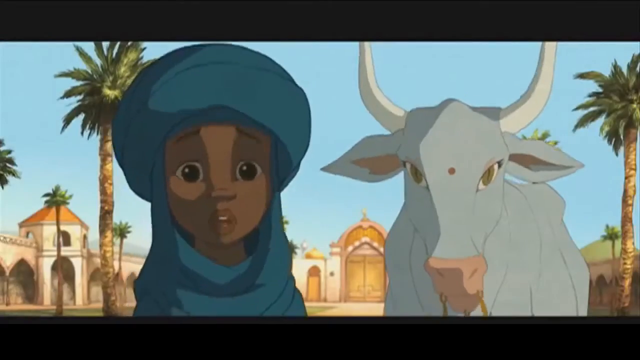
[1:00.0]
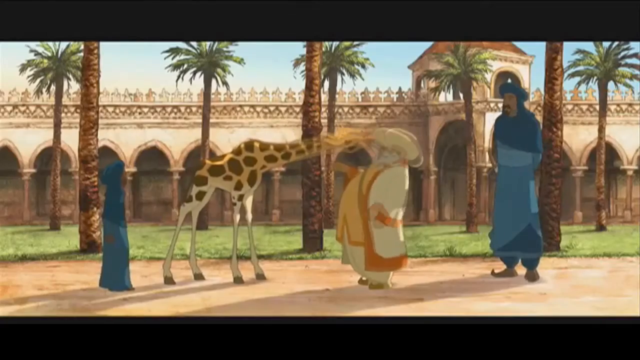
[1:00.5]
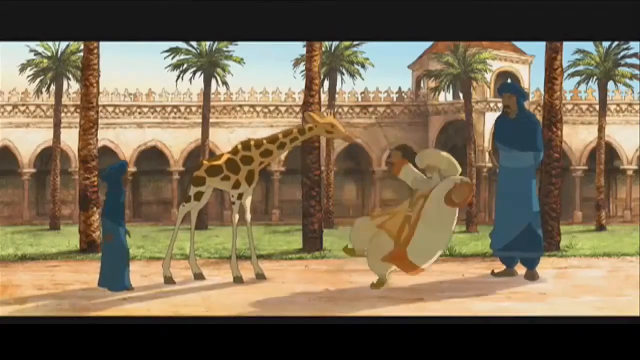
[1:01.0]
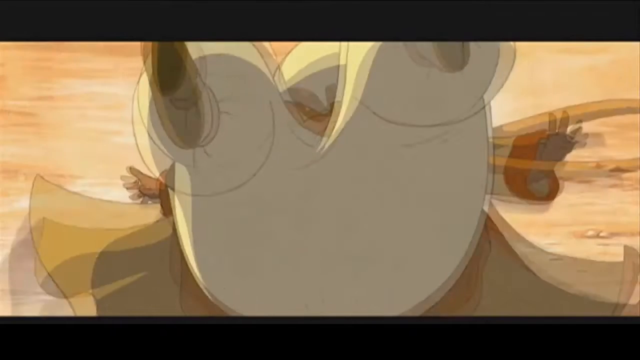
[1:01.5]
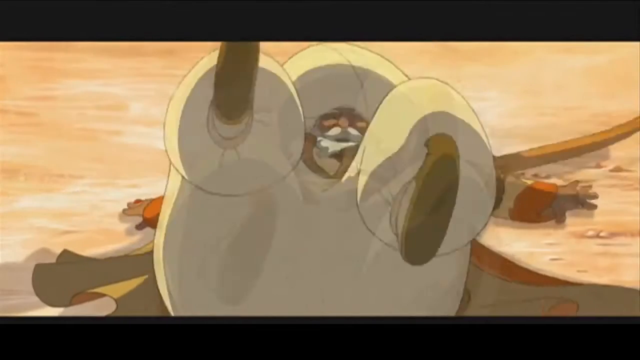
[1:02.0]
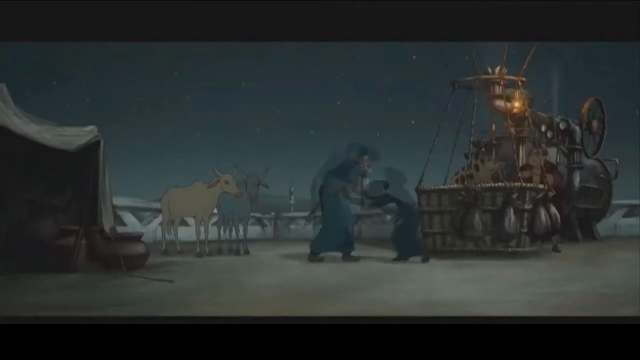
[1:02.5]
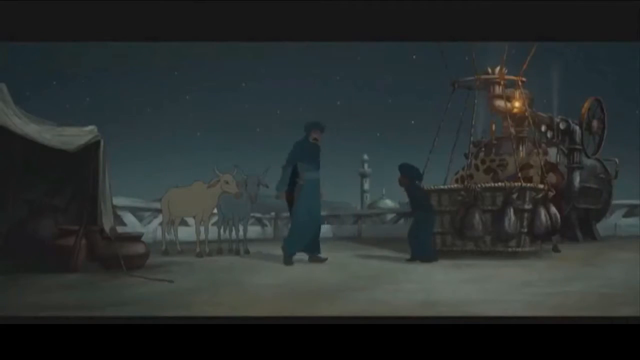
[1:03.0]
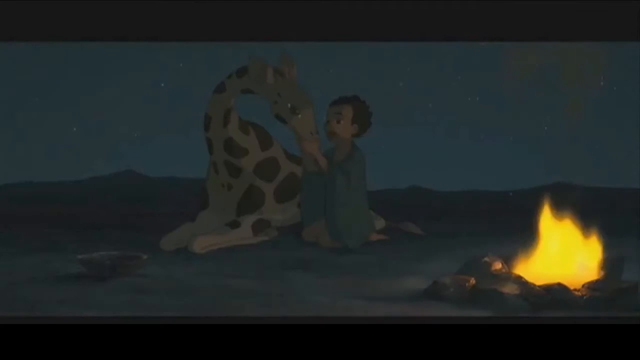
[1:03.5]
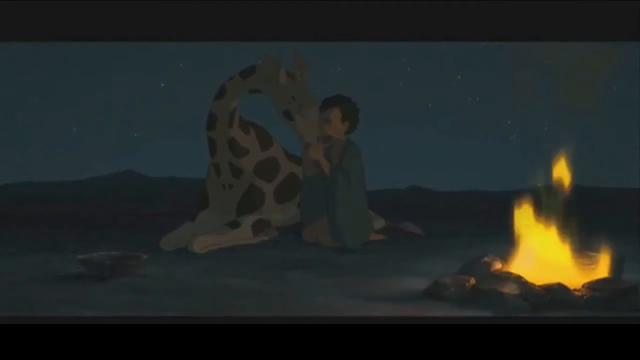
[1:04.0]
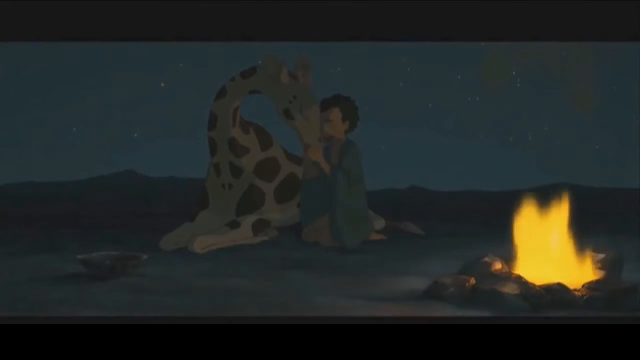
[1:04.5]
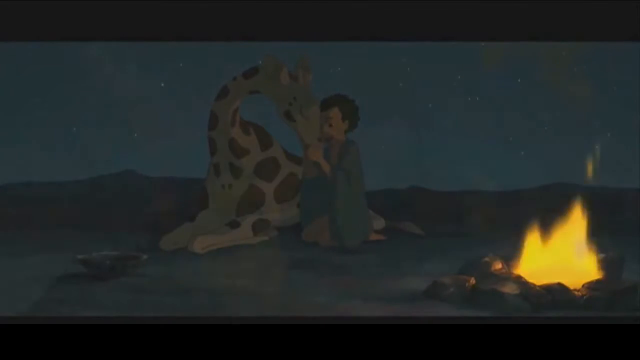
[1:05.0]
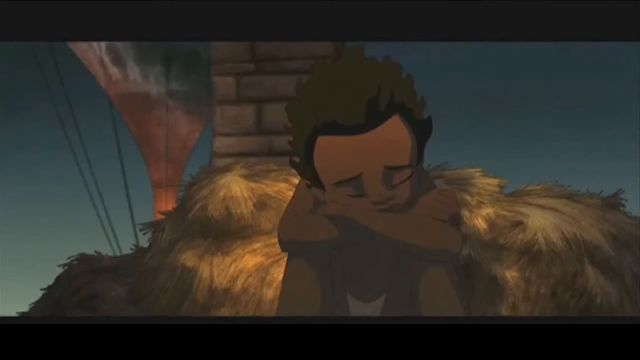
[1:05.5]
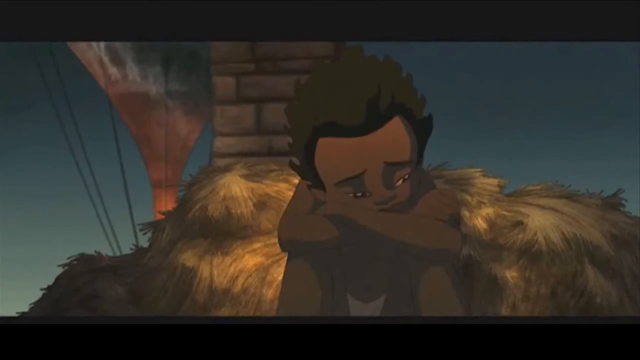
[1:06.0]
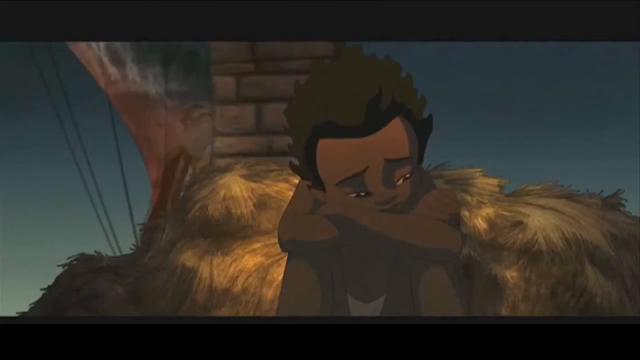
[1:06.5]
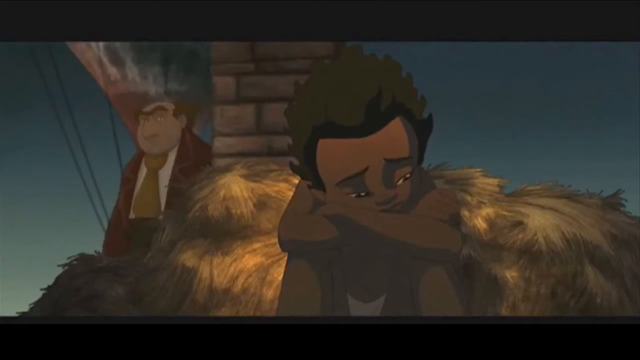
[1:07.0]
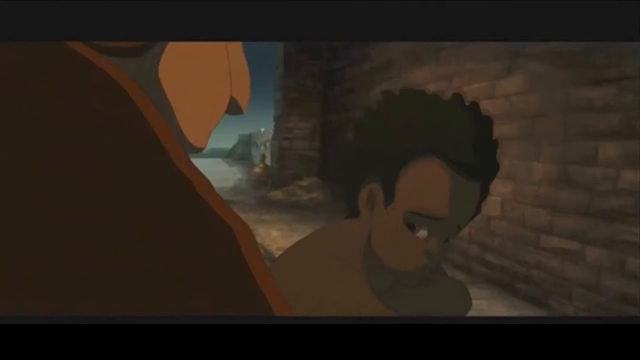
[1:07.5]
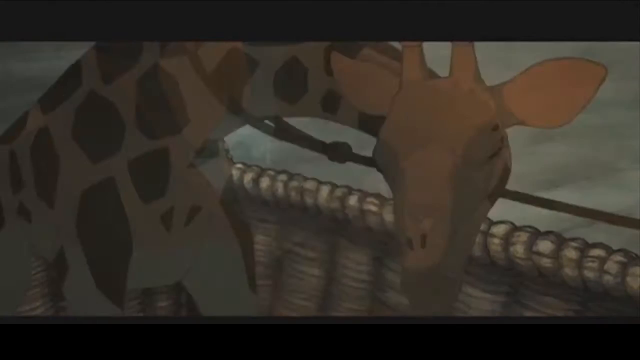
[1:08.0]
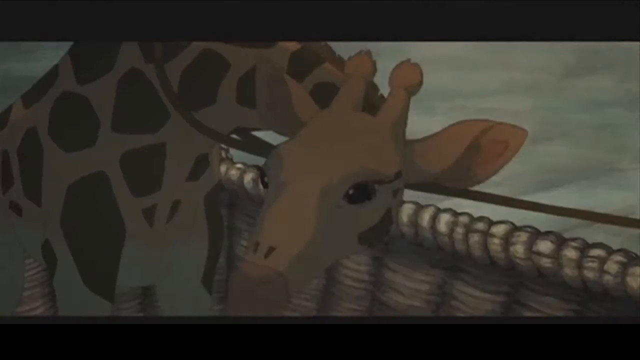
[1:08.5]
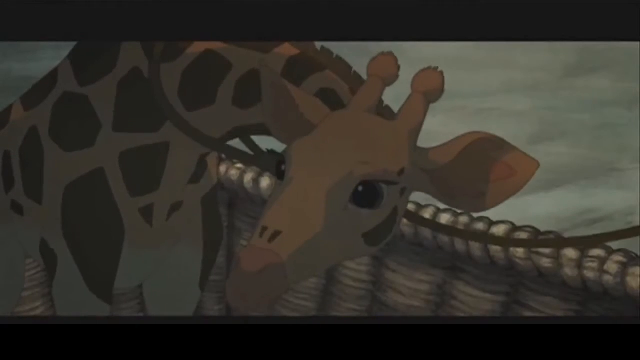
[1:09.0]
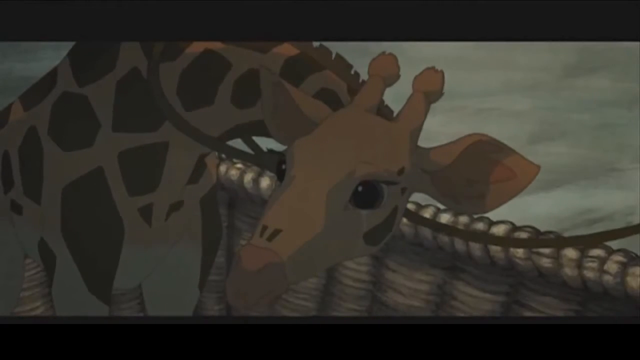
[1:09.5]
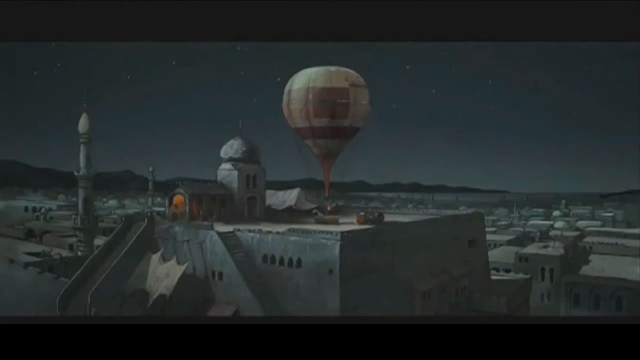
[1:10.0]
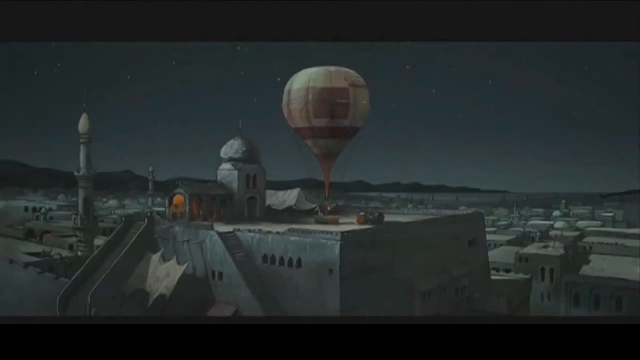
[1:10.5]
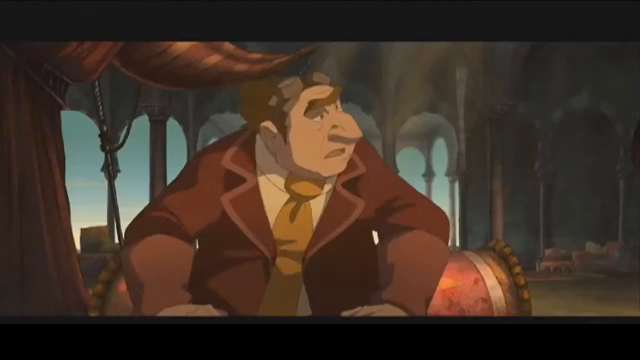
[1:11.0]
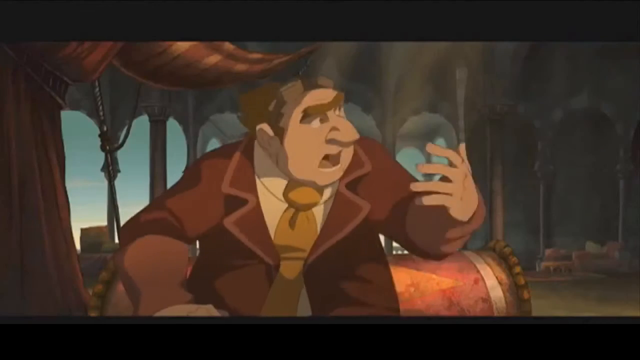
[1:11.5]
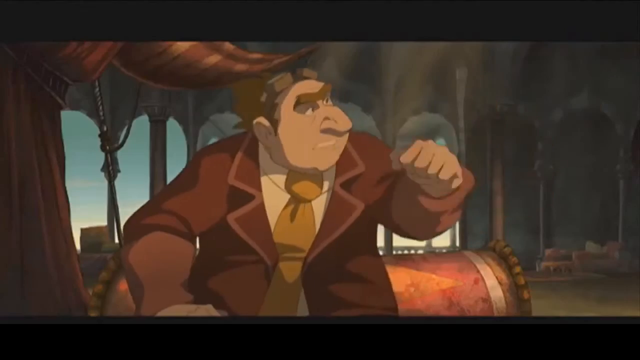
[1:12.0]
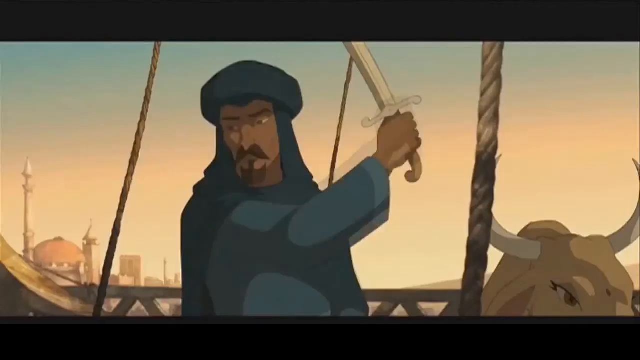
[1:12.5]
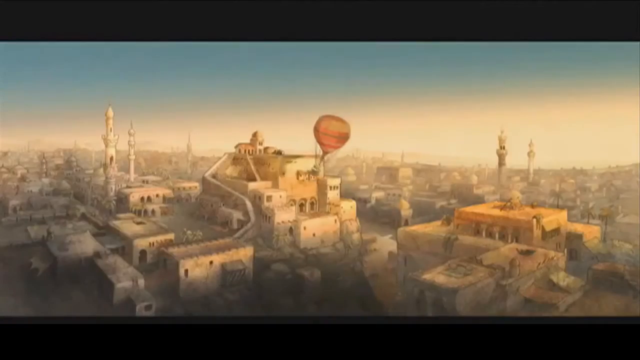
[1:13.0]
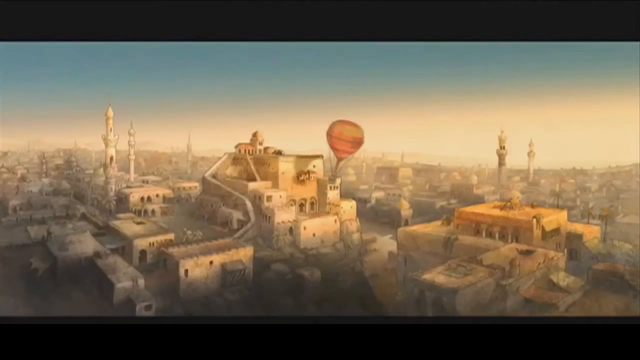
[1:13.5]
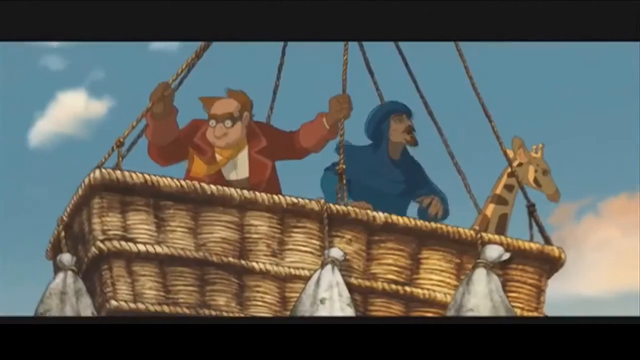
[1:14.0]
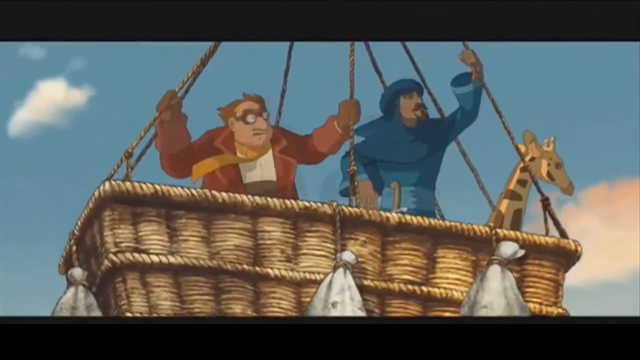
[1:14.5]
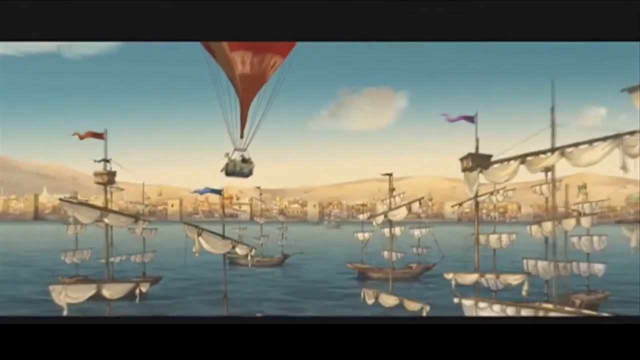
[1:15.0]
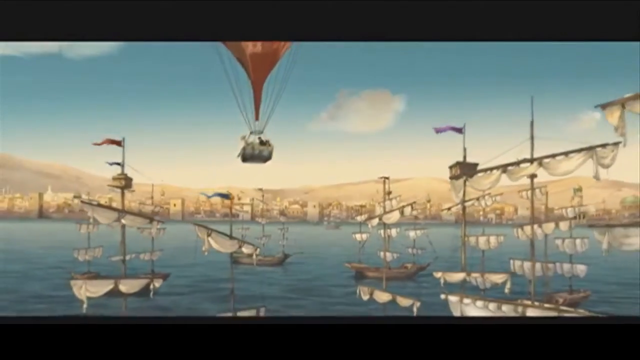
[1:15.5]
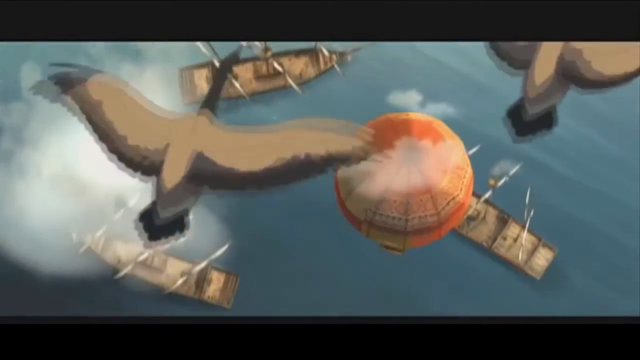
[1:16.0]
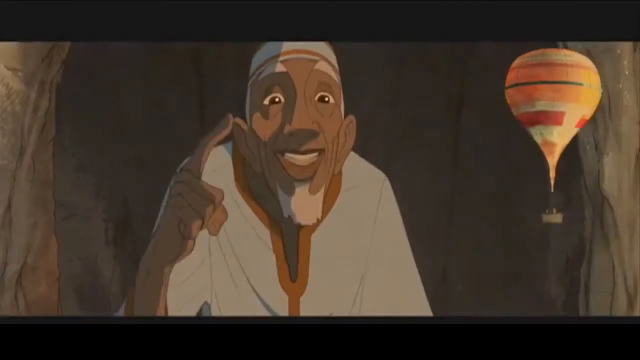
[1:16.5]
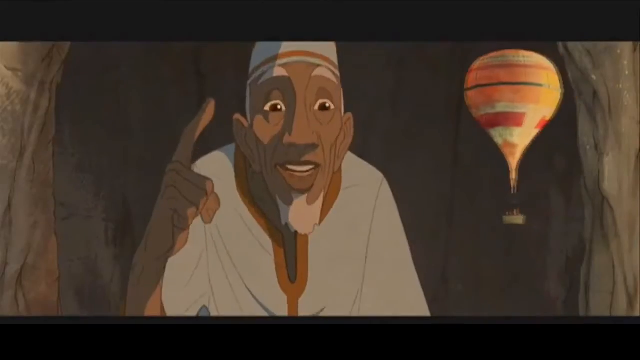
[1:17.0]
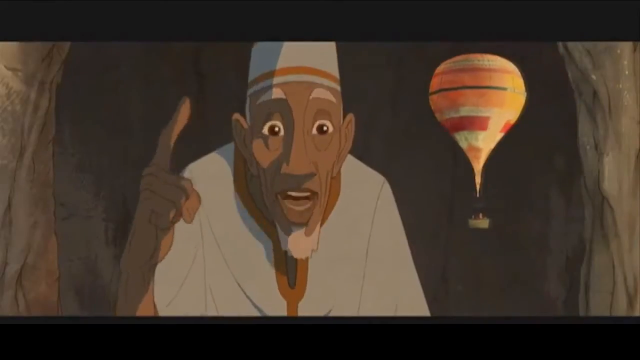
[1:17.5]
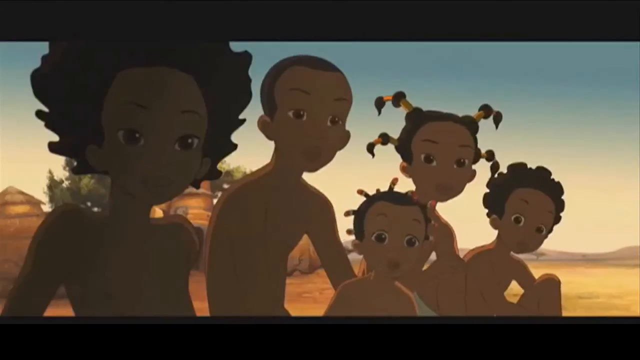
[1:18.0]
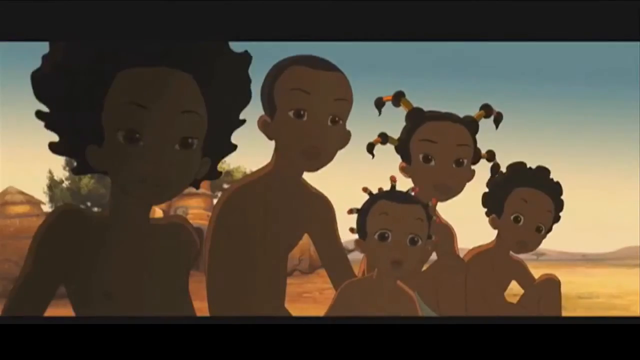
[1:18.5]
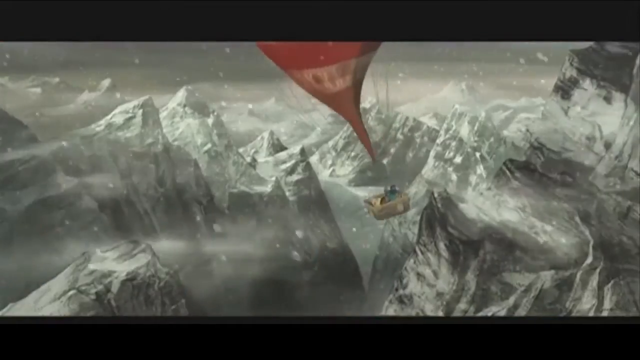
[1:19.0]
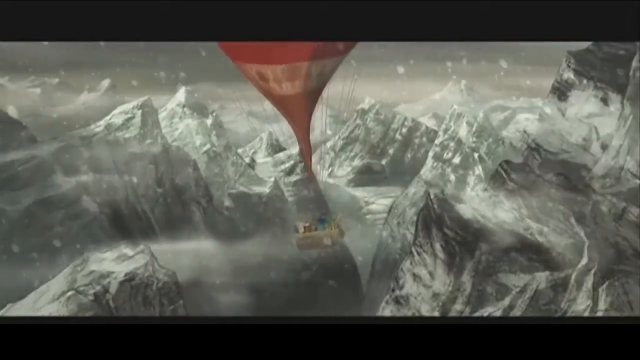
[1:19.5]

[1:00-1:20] The animated film trailer looks as though it is set in the Middle East, with characters including a man in a blue turban, a blue shawl or scarf around his shoulders and a long blue robe, a young boy dressed the same way, and the animals they travel with. The boy and the man stand in the courtyard of what looks like an Arabian palace with a man dressed in a large white turban and a white coat with gold trim. That man stands next to a baby giraffe, which startles him, and he falls to the ground. Later the man and the boy stand next to the base of a hot air balloon, speaking with a character who looks European and wears European-style clothes with a tie. A hot air balloon is on top of a building that looks like it is in Arabia, with minarets around it and onion-shaped domes on some of the buildings. A close-up shows the European man in a red coat with a yellow tie and goggles on top of his head. In the basket of the balloon, the man with the blue turban uses a scimitar to cut a rope holding the balloon, and the balloon floats away over the city, carrying the man with the blue turban, the European-looking man and the giraffe. They float over a harbor filled with boats. A close-up shows an older man who looks Asian or African sitting in front of a cave, speaking to someone, as the balloon passes behind him, smaller than it would be in real life. The scene changes to five African children sitting in front of him, looking at him. The hot air balloon then passes over a mountain range that appears to be covered in snow.